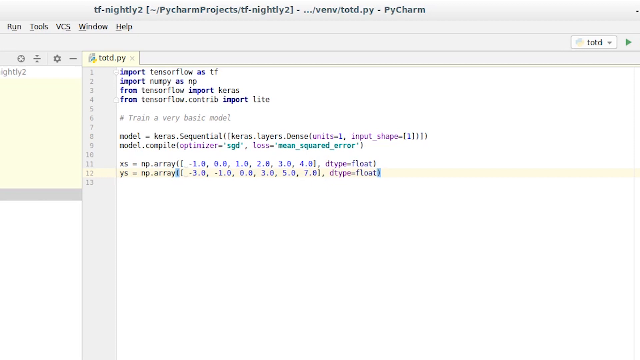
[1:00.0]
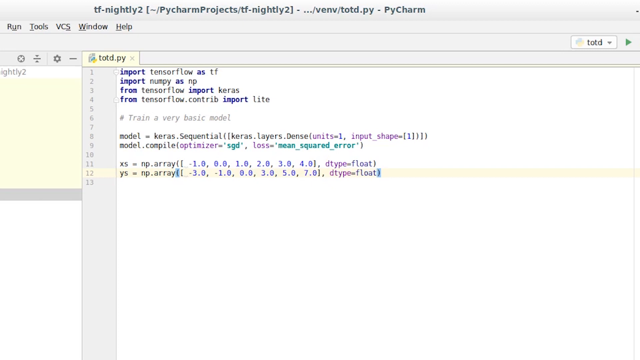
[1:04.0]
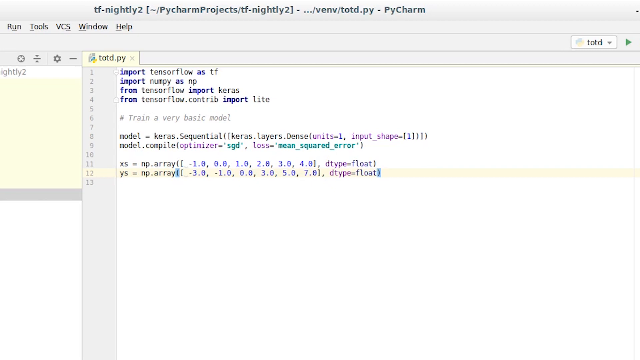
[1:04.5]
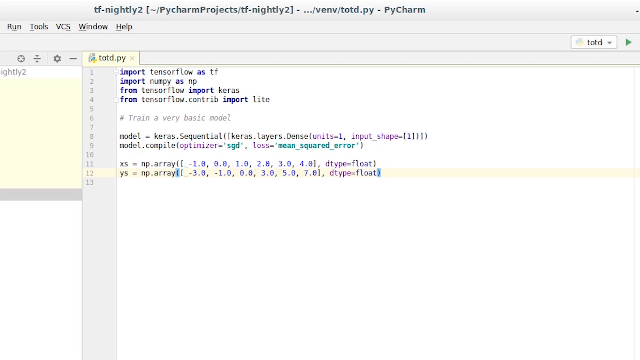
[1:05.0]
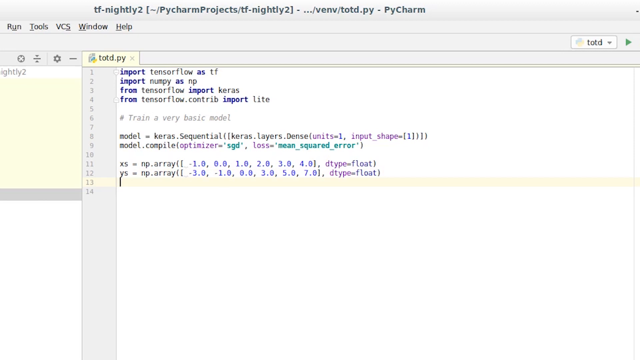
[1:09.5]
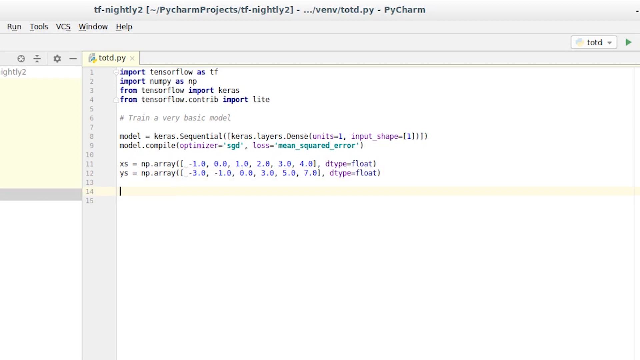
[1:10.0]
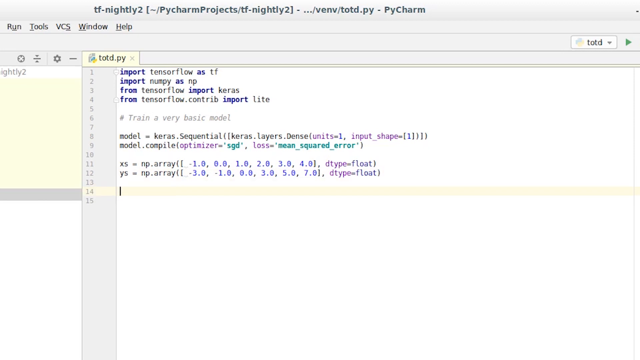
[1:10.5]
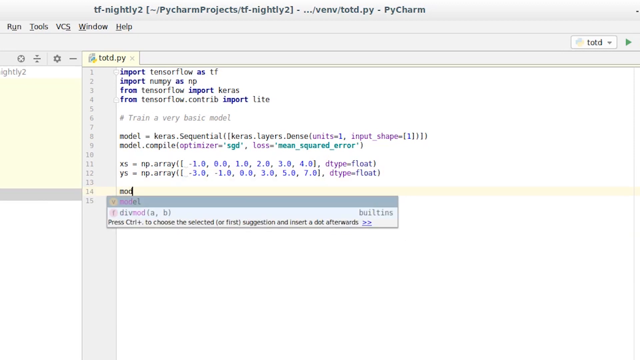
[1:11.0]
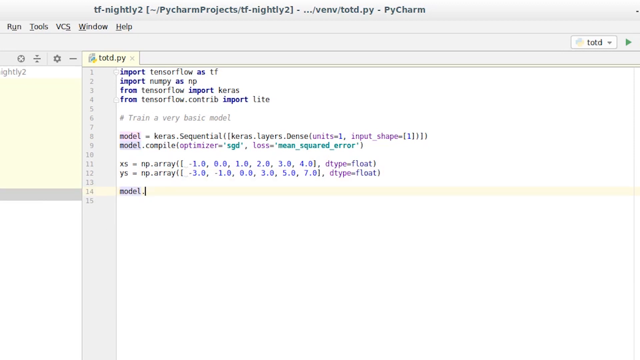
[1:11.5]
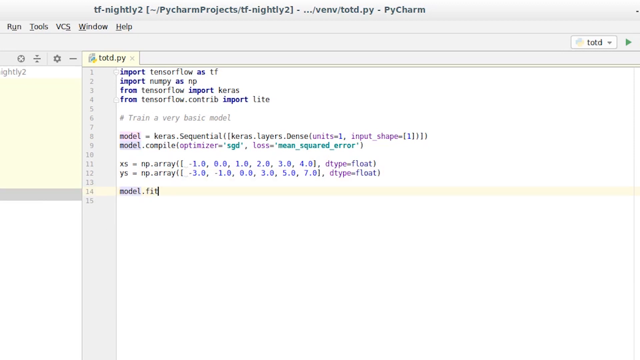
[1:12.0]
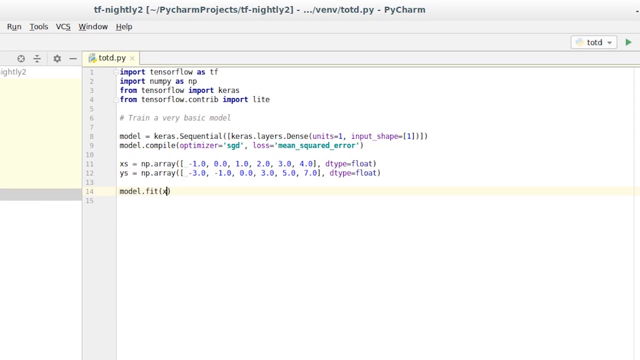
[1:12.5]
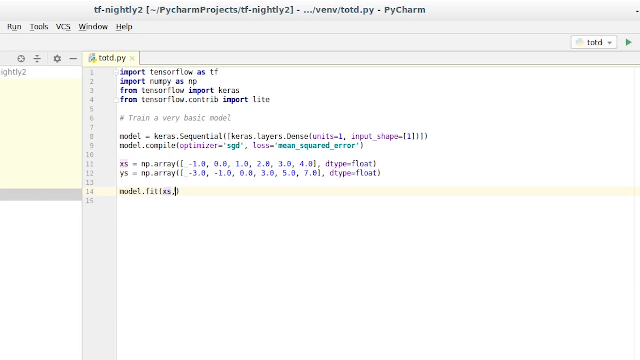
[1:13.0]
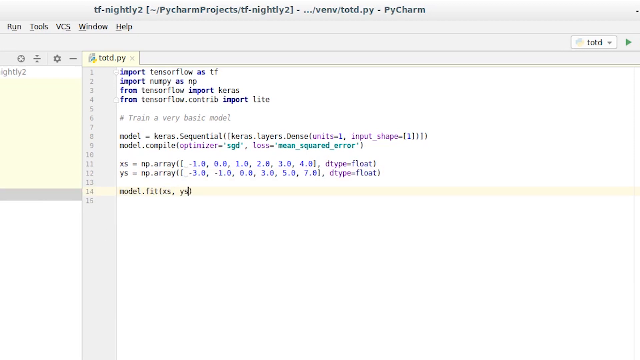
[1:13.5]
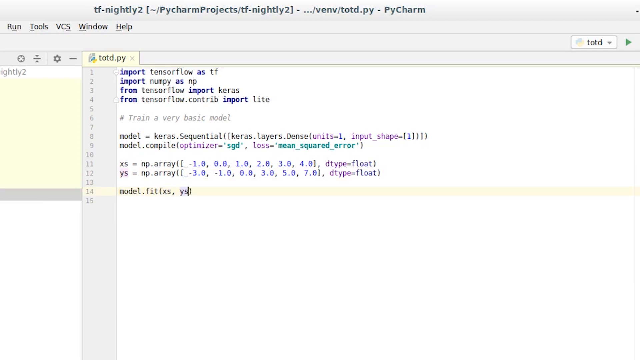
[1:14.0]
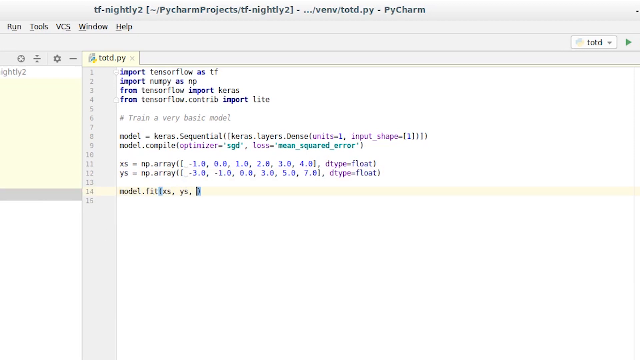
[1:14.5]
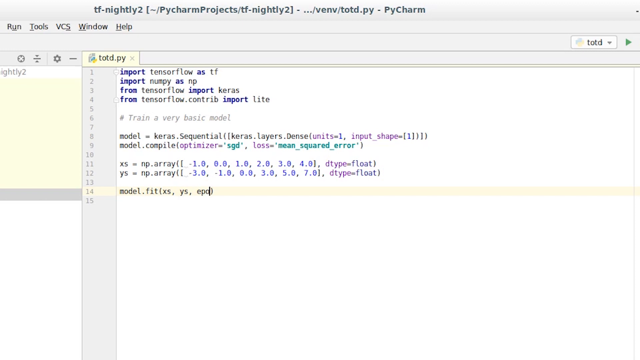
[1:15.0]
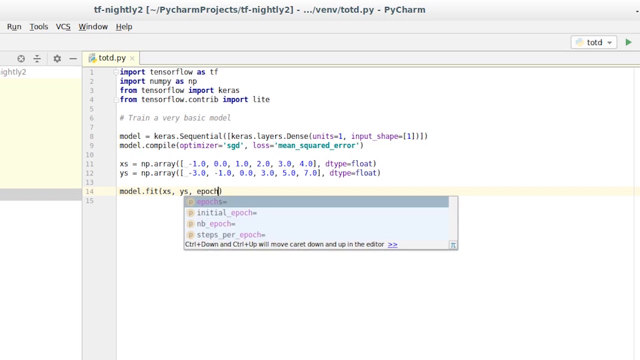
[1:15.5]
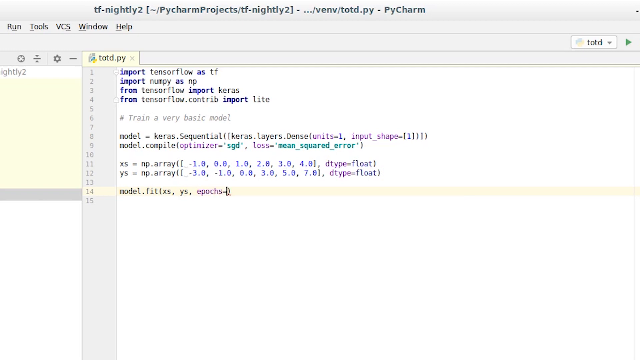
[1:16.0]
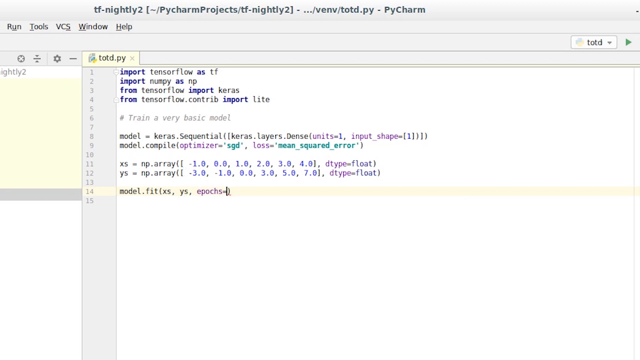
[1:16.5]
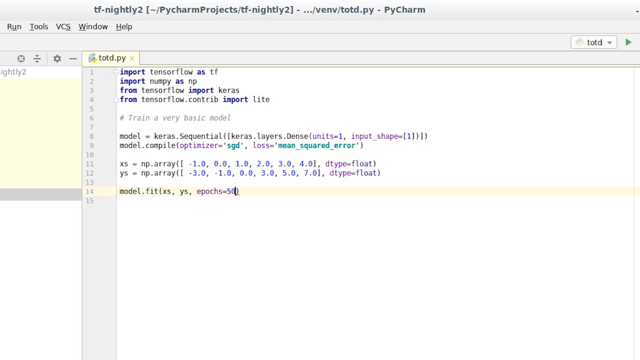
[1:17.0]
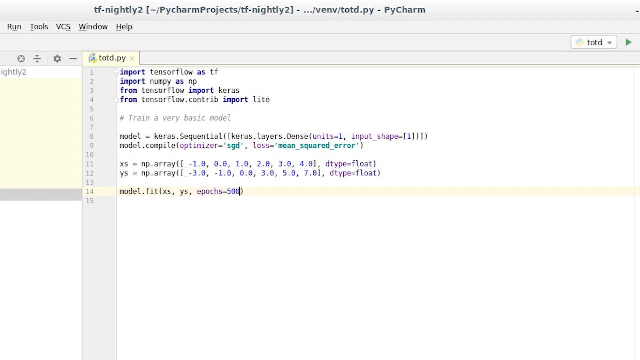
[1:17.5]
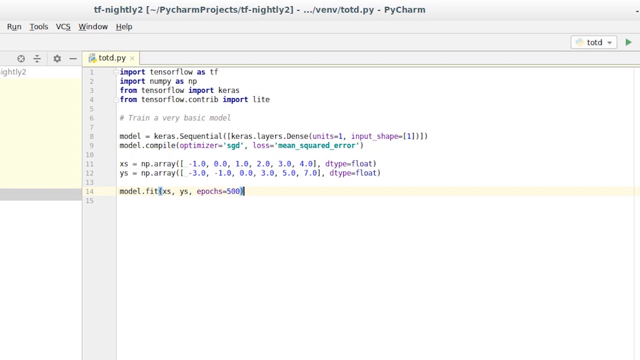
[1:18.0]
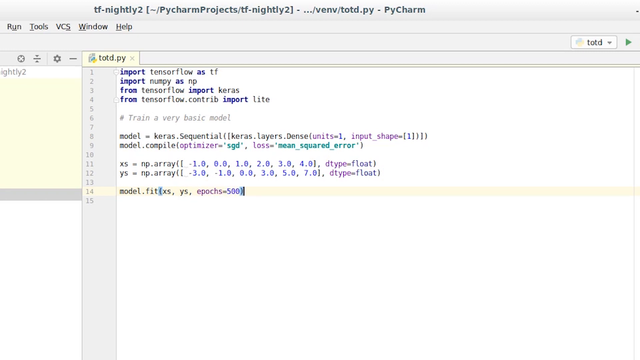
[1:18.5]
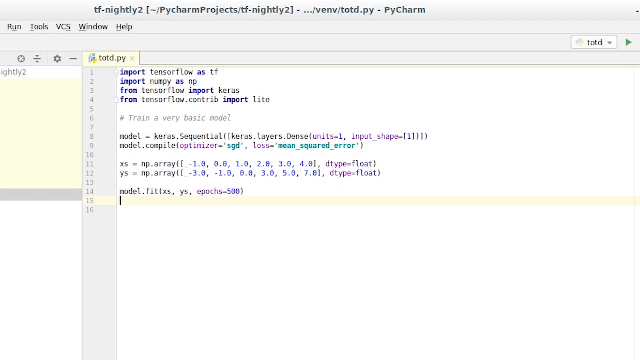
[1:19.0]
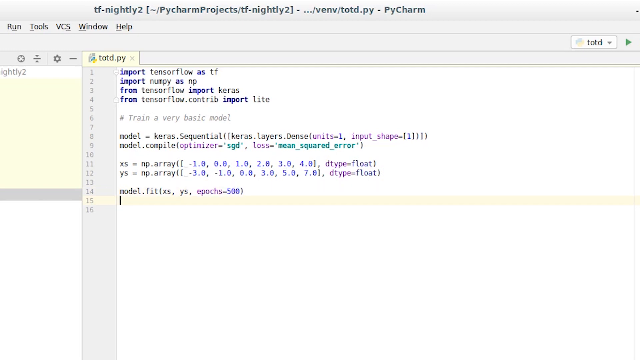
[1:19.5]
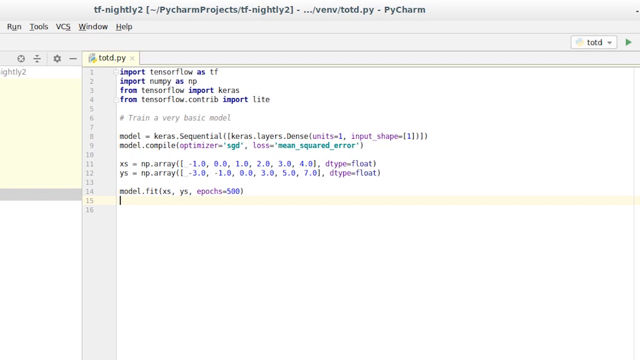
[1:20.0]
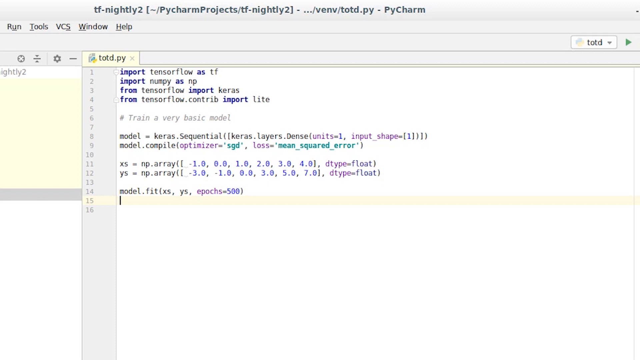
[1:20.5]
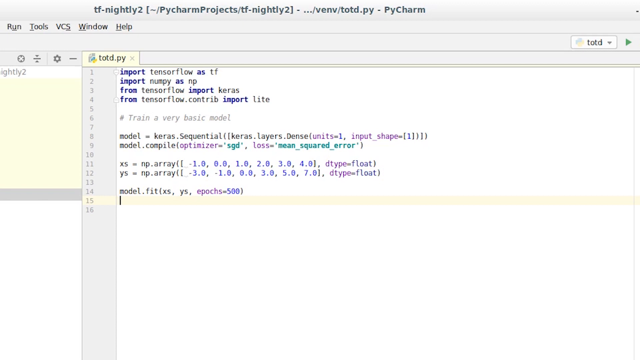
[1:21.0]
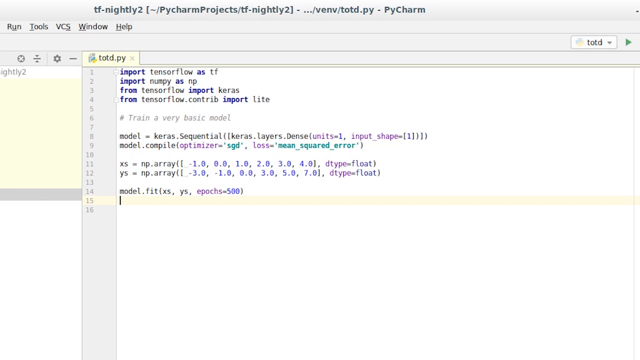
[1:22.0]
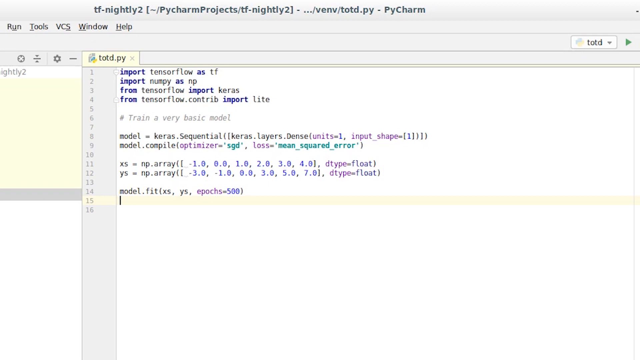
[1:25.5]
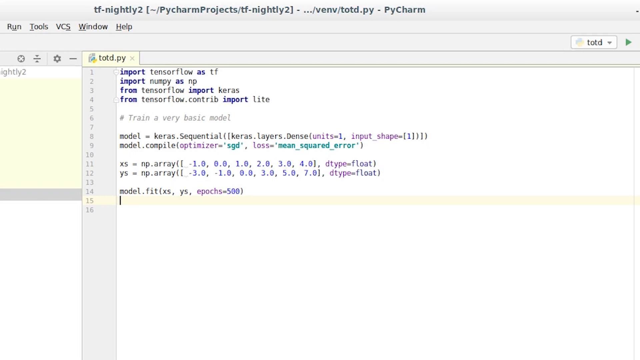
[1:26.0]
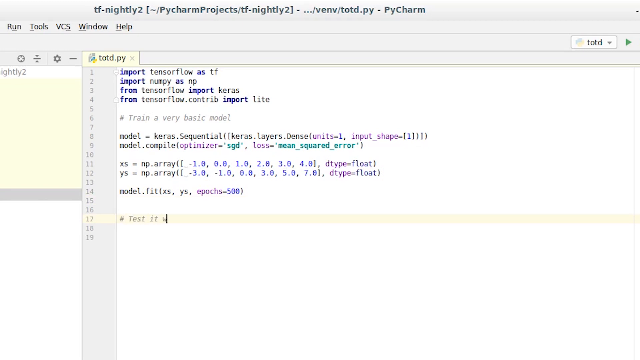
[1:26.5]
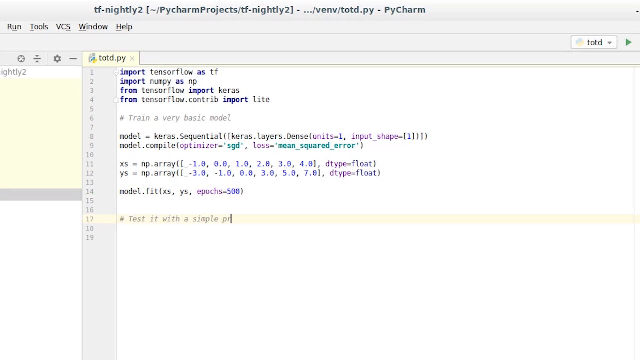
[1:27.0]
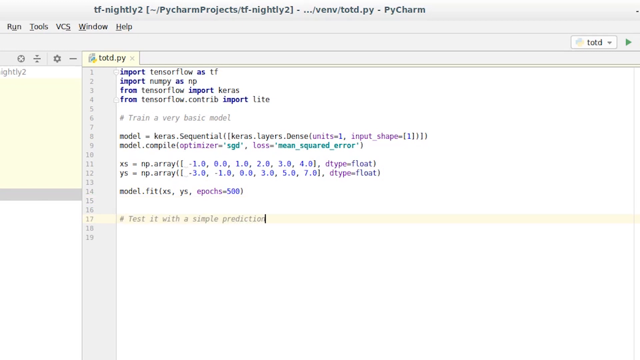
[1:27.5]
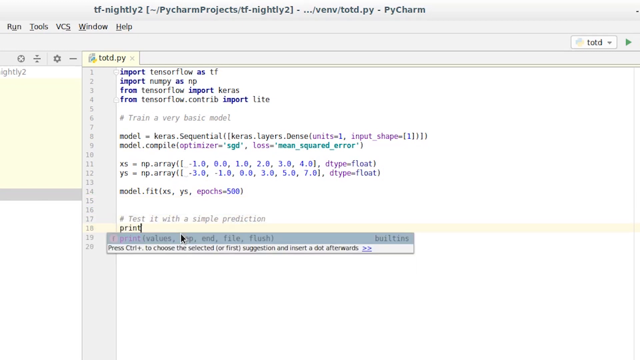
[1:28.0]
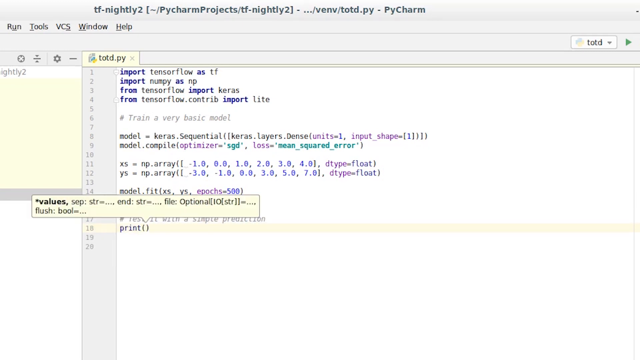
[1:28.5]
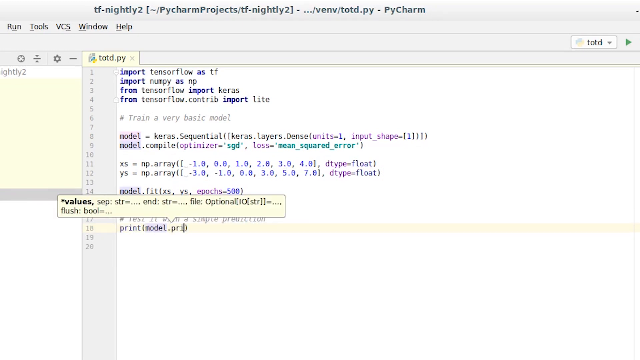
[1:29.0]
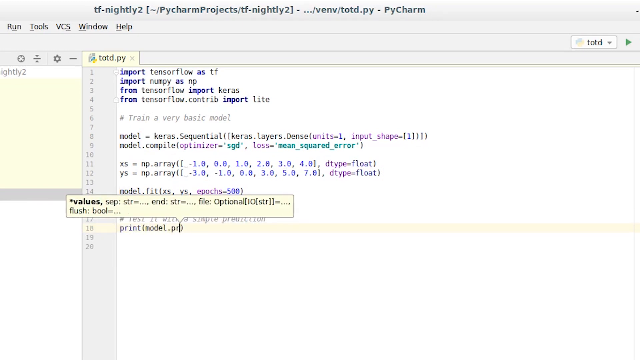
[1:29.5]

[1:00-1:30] Someone is on a document or web page labeled "TF Nightly 2," with "PyCharm Projects" visible. The code reads "import tensorflow as tf" and "import numpy as np," and they type more code, including "np.array." The text is in different colors: black, purple, blue and green font. A line reads "train a very basic model," followed by typed code including "model.fit." Next comes the line "test it with a simple prediction."